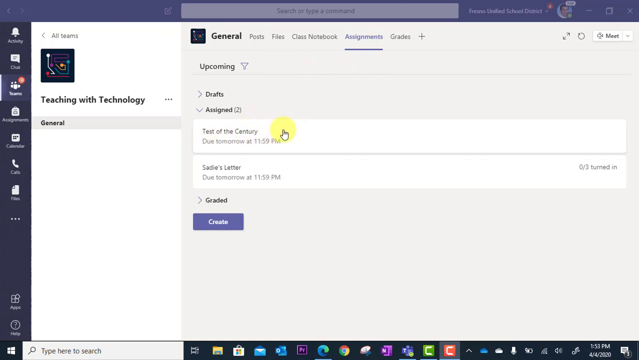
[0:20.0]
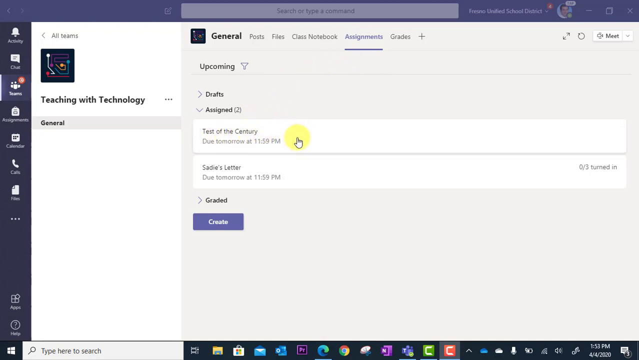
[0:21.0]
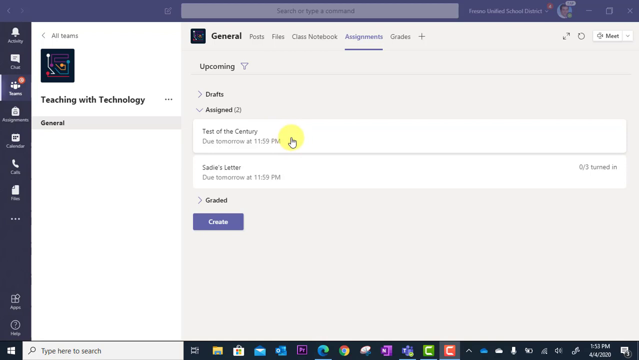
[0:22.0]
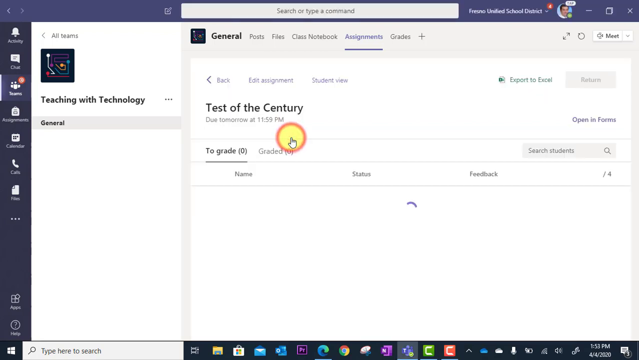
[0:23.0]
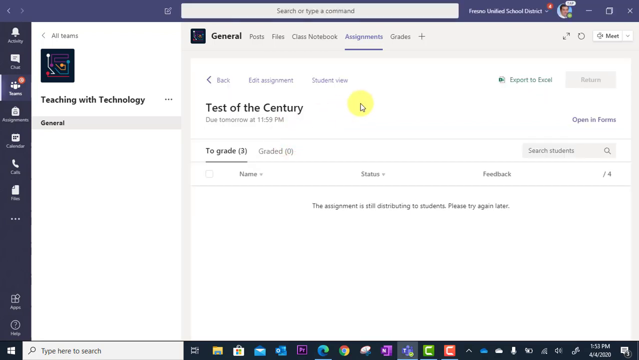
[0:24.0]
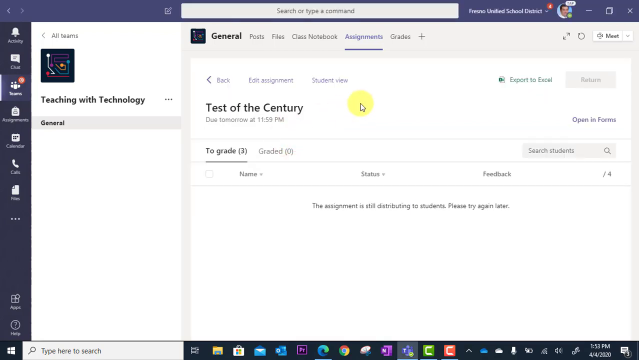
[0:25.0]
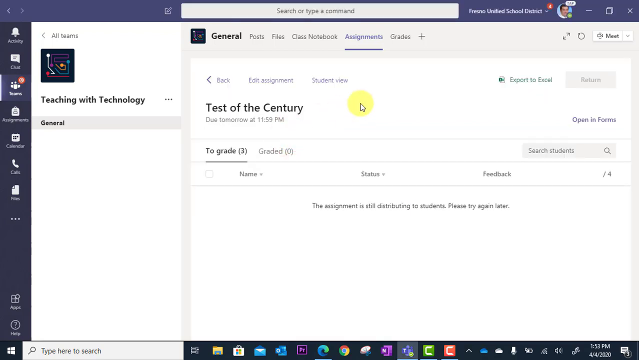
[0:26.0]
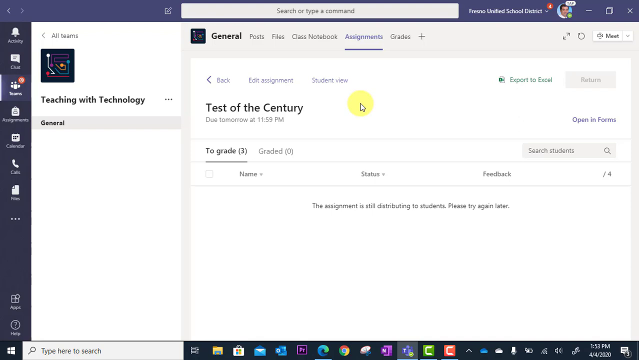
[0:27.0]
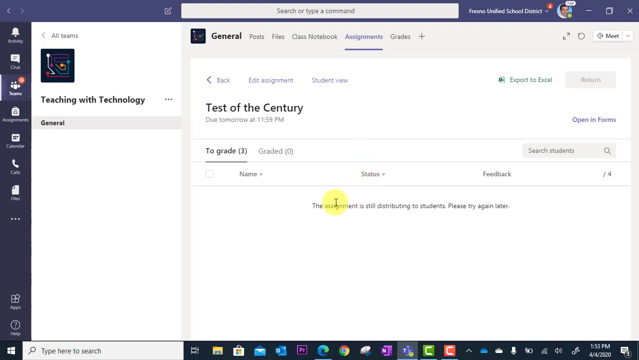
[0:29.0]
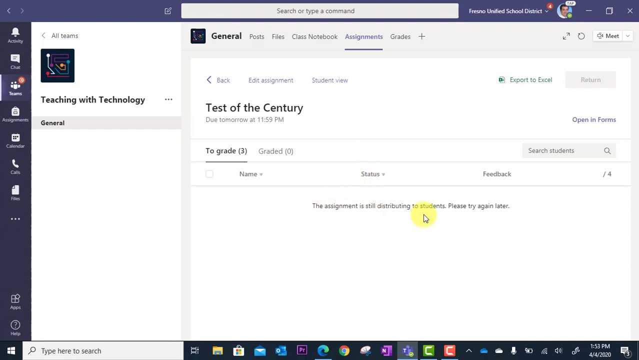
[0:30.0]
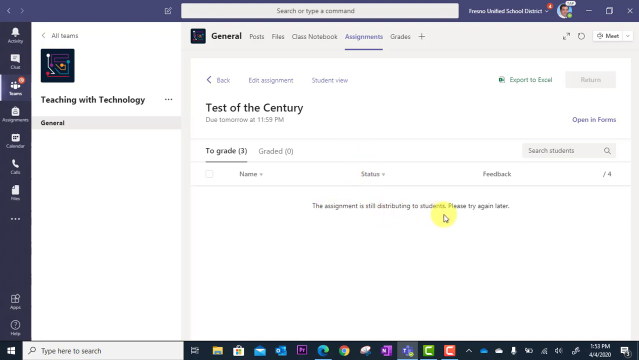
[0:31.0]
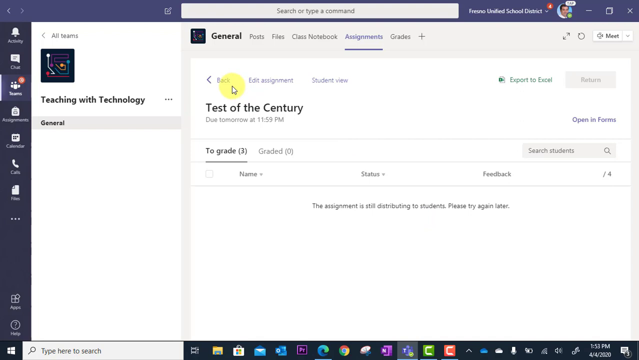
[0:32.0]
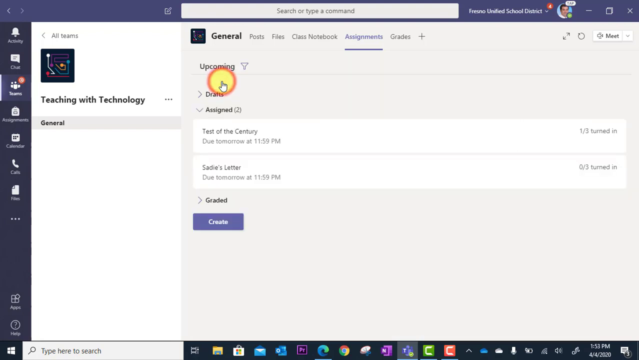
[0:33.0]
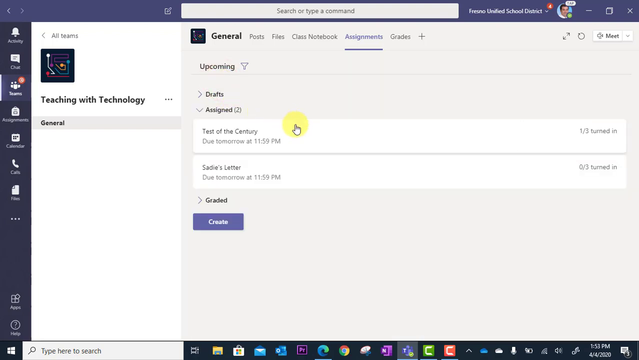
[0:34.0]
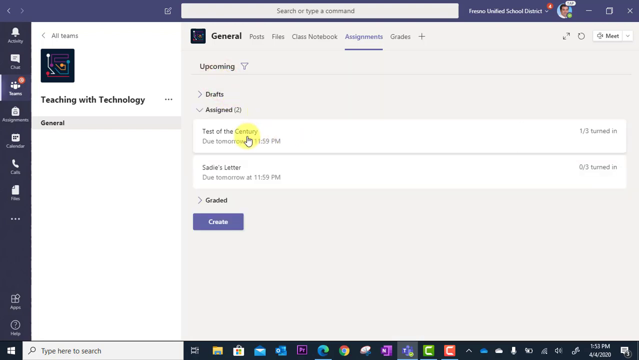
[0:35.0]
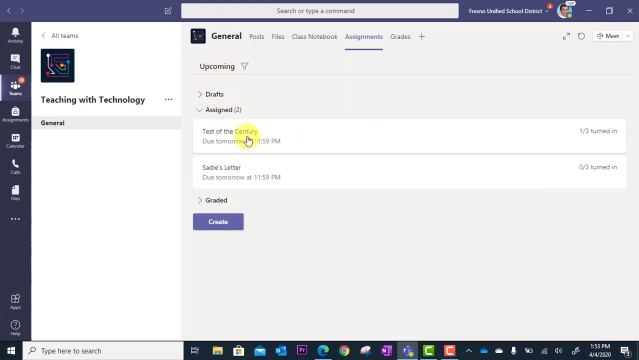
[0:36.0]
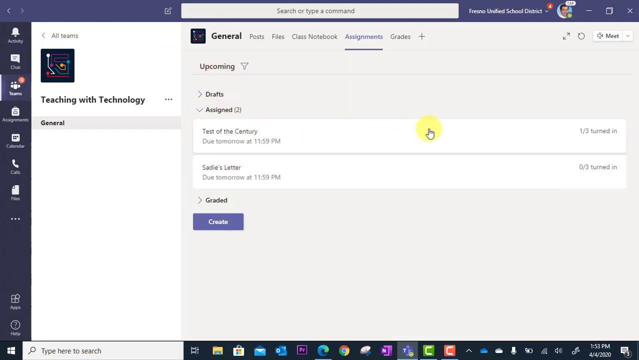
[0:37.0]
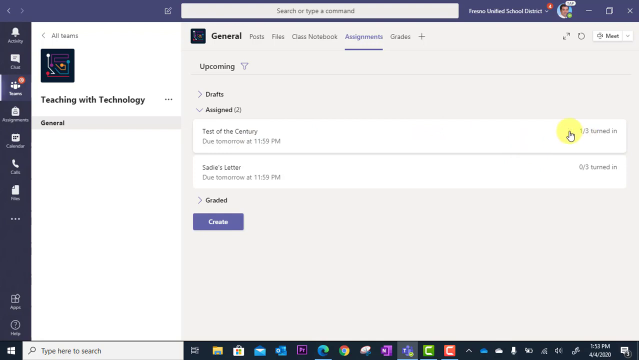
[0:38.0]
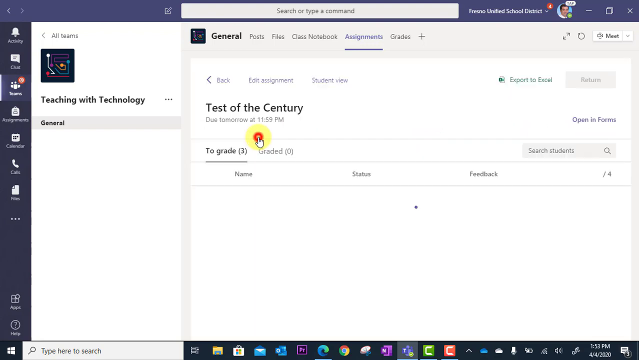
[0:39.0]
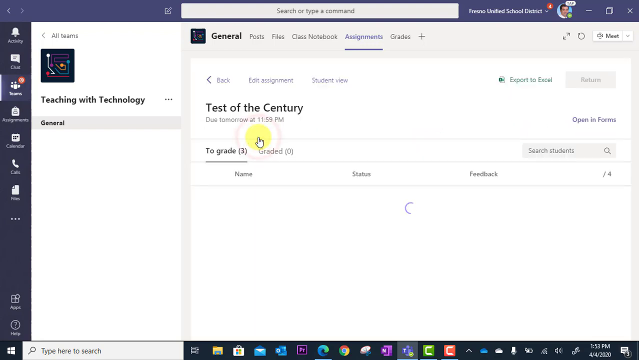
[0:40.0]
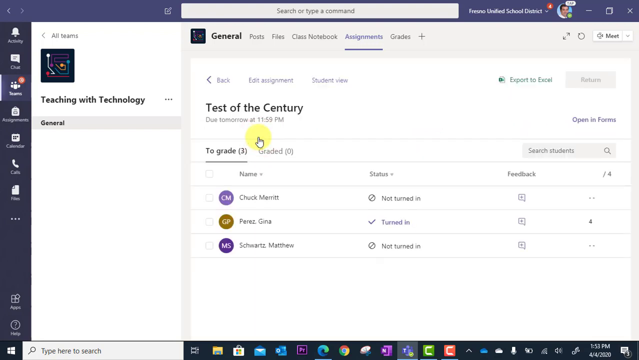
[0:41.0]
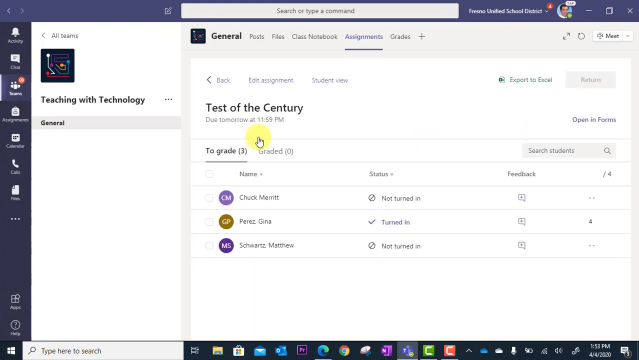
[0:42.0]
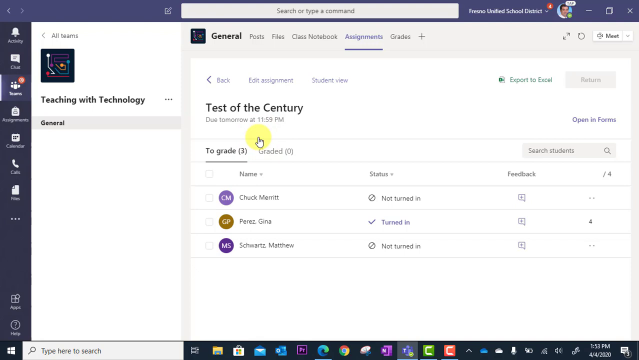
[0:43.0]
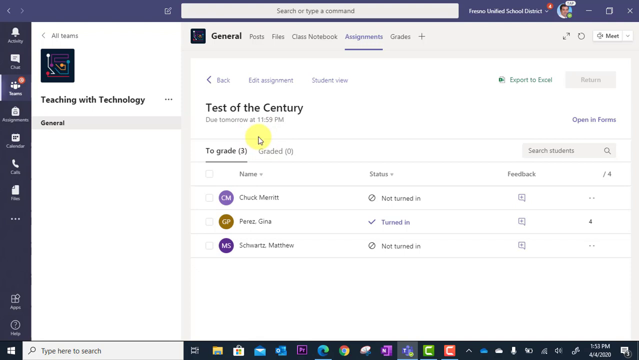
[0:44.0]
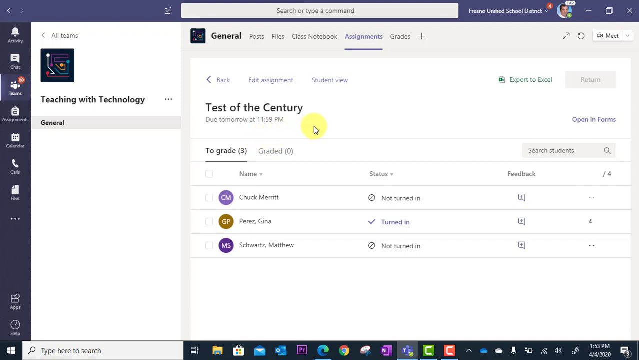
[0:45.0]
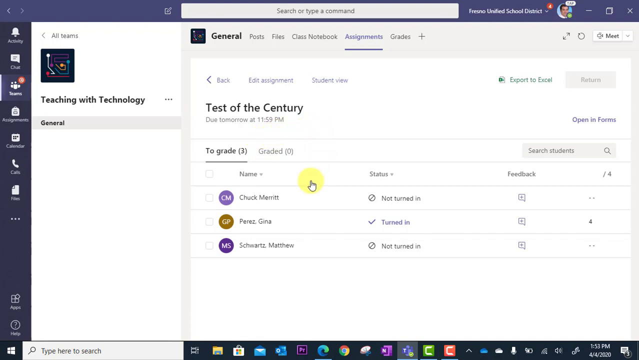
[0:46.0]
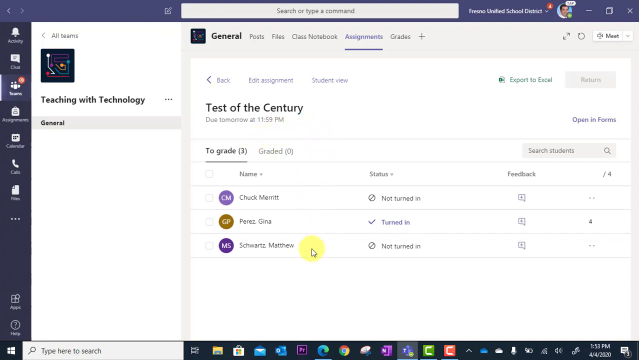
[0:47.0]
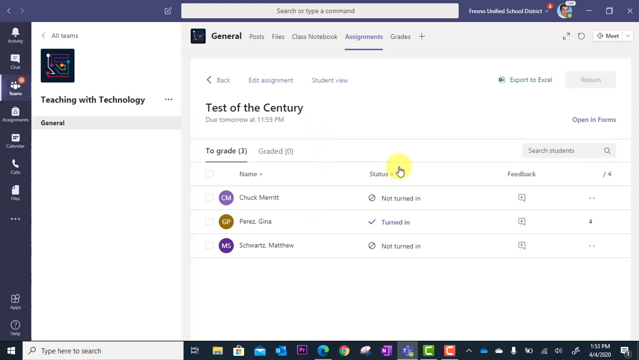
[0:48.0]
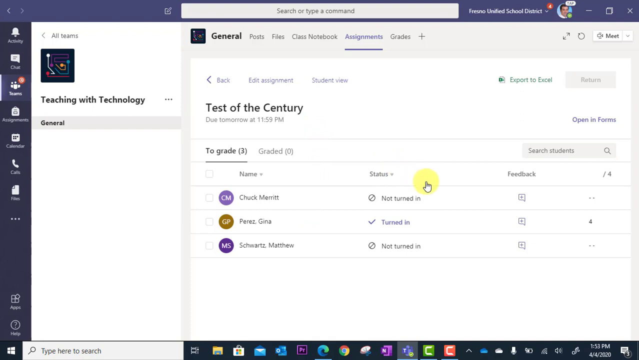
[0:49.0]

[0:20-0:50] The view continues within the Microsoft Teams "Teaching with Technology" team under the Assignments tab. At first the Upcoming section is still visible, showing the two assignments, "Test of the Century" and "Sadie's Letter." The cursor moves and clicks on the first item, "Test of the Century," due tomorrow at 11:59 p.m. The display updates to a detailed view for that assignment. The header reads "Test of the Century," with the due date directly underneath. There are two tabs, labeled "To Grade" and "Graded," with the To Grade tab selected. A list of three students appears in a table with columns for name, status, and feedback: Chuck Merritt, Gina Perez, and Matthew Schwartz, each accompanied by a circular icon with their initials, CM, GP, and MS. Gina Perez has a status of "Turned In," with a score of 4 of 4 in the Feedback column. Chuck Merritt and Matthew Schwartz both have "Not Turned In" as their status and no score listed.